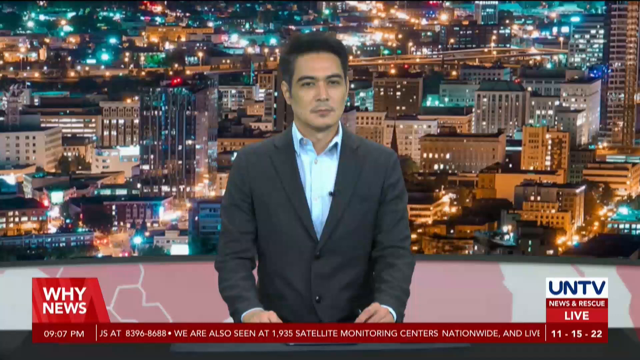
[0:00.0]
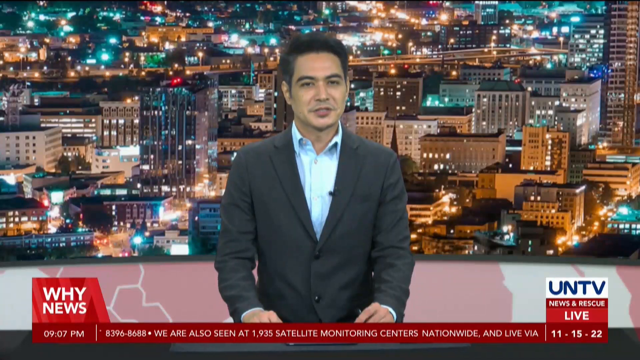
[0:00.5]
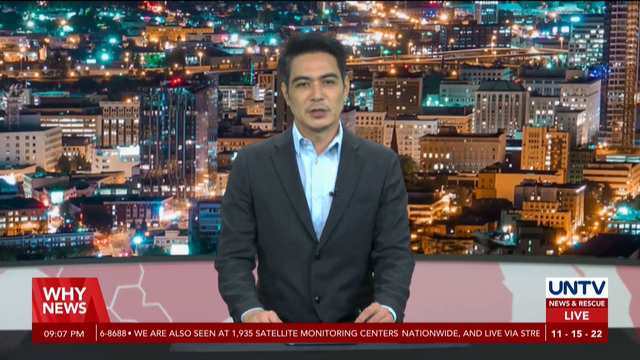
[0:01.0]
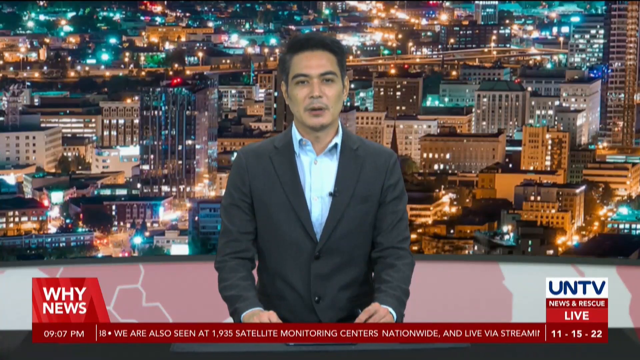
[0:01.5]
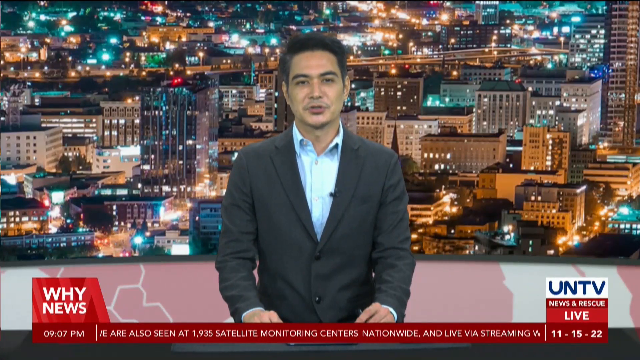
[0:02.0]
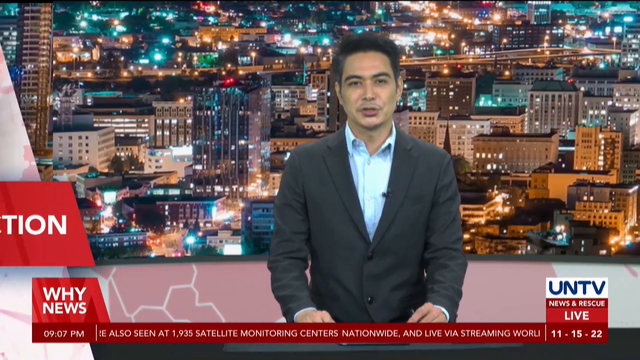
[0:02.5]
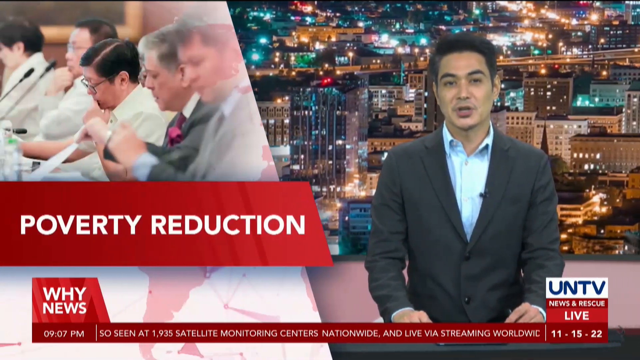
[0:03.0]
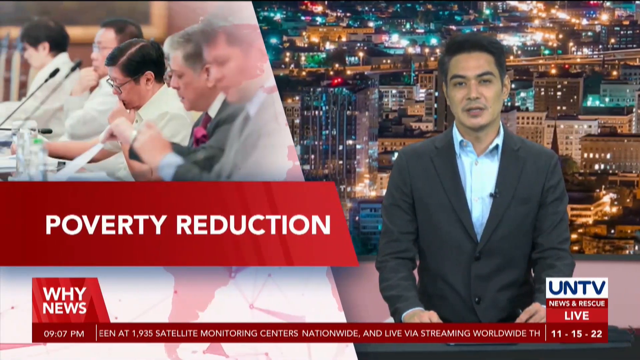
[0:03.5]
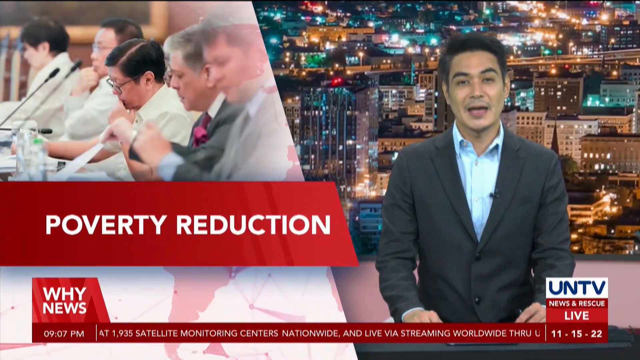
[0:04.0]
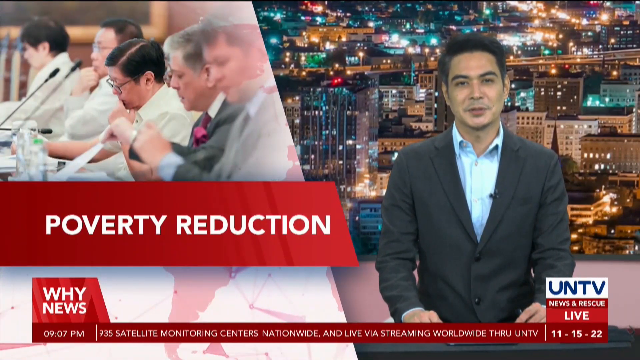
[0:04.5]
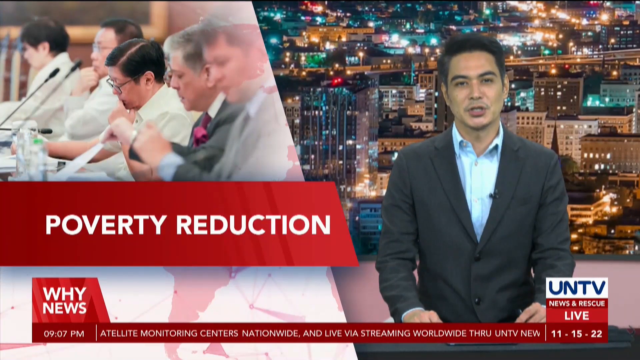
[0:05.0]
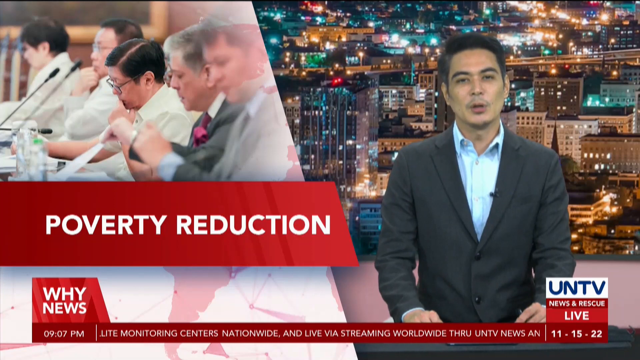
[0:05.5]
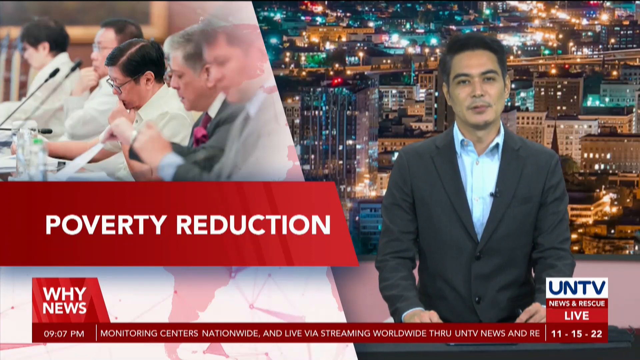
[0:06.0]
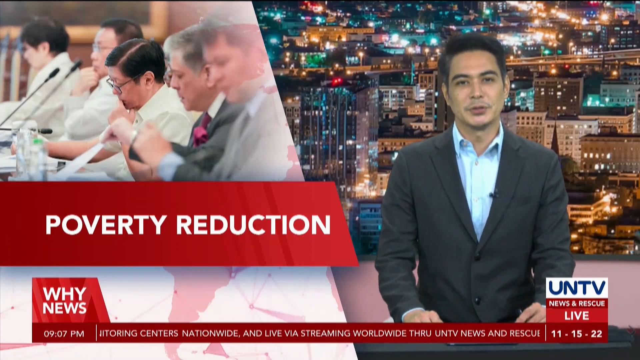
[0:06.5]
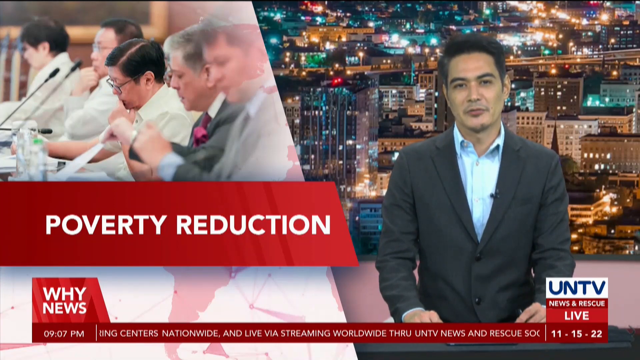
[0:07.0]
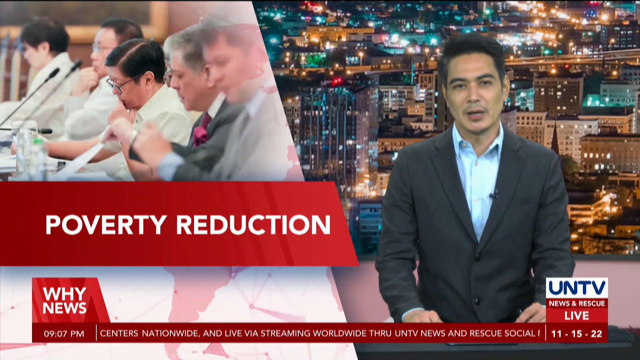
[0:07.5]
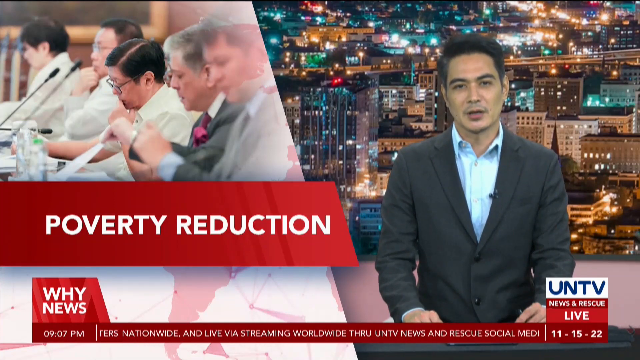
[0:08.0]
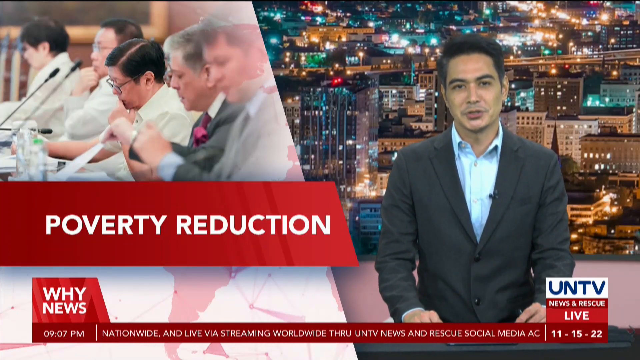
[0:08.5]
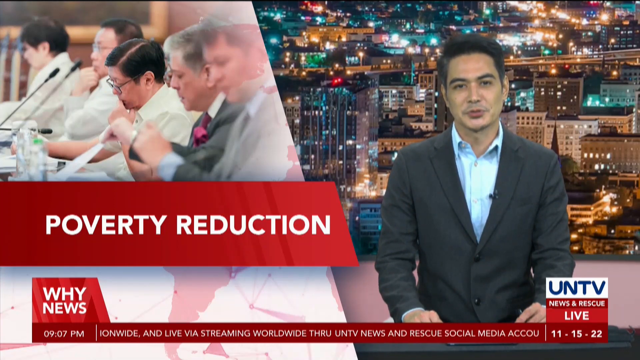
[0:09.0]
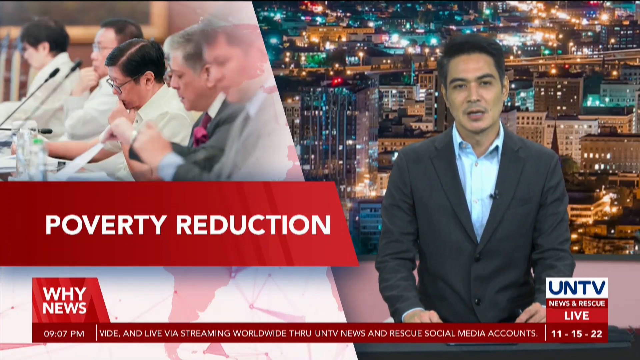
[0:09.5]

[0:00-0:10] The video opens with text including "News and Rescue Life" and "Poverty Reduction." A news presenter is talking; he looks sort of Asian, though this is uncertain. He wears corporate attire: a black jacket with a blue shirt underneath, and he has quite dark hair. On the screen behind him is a picture of a city with many city lights. The subject of his presentation appears to be poverty reduction. He is in a news studio.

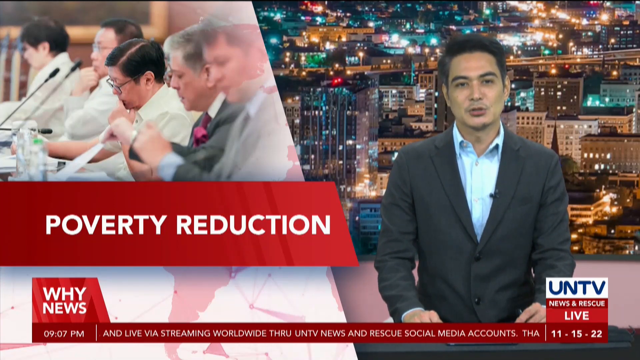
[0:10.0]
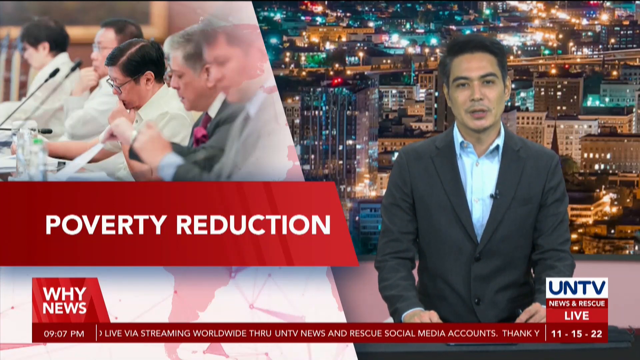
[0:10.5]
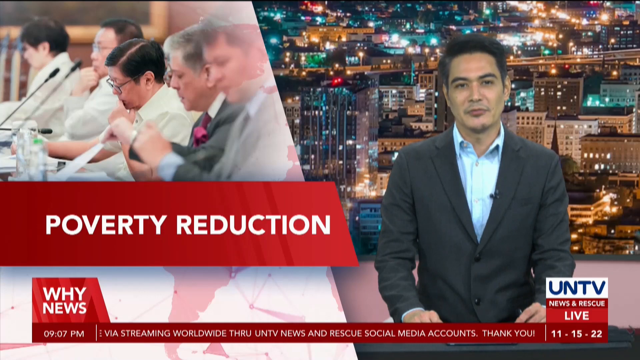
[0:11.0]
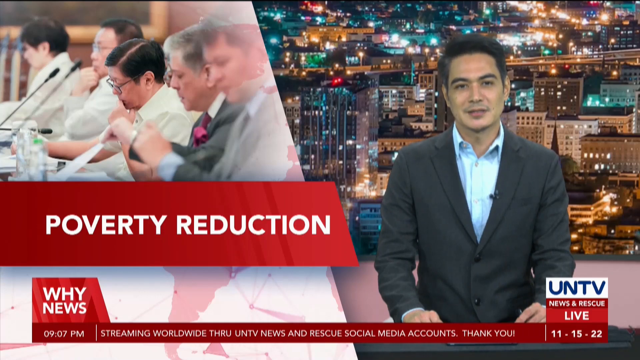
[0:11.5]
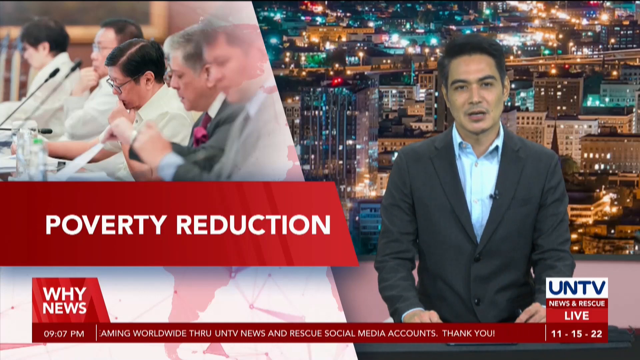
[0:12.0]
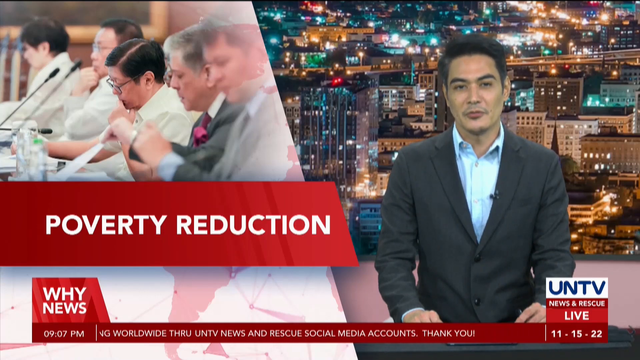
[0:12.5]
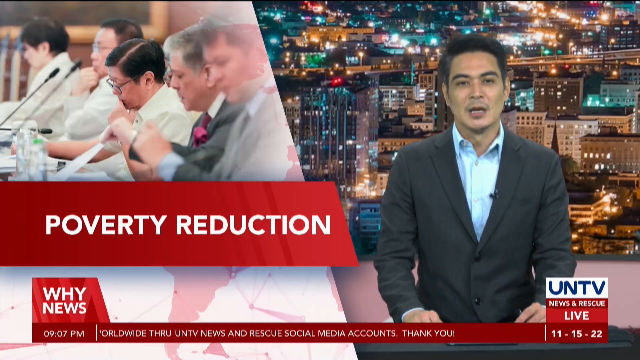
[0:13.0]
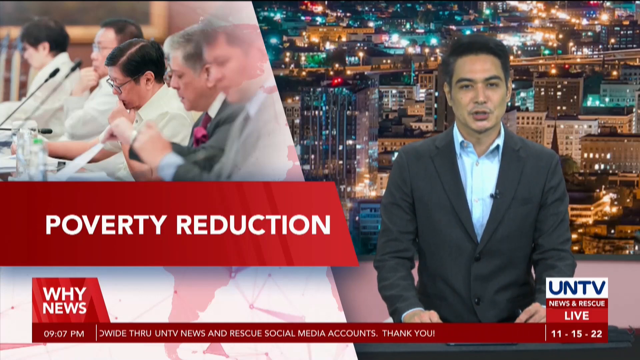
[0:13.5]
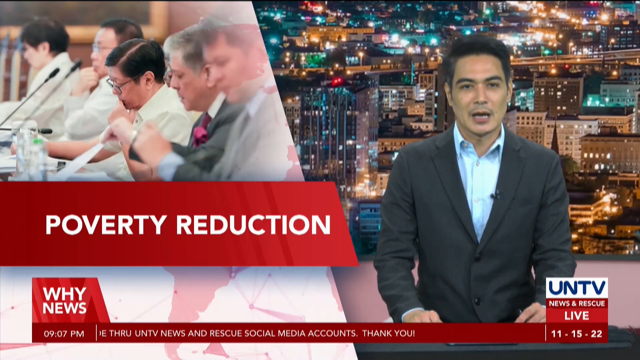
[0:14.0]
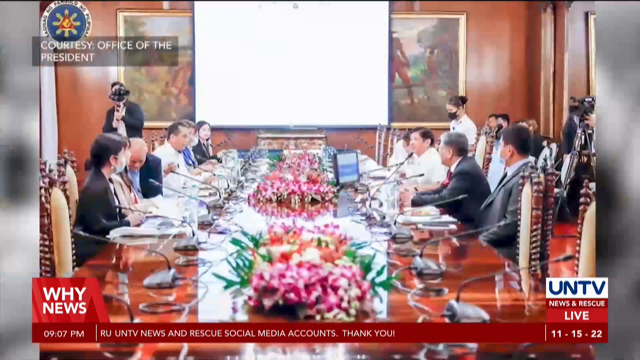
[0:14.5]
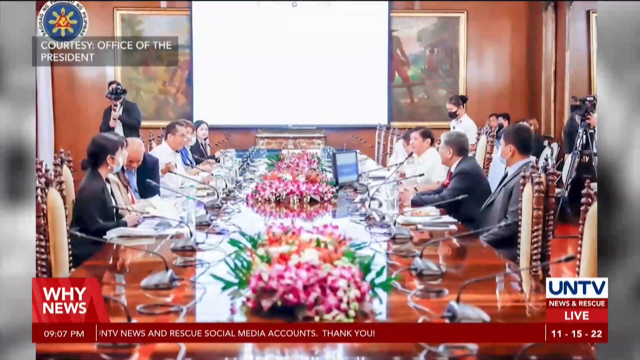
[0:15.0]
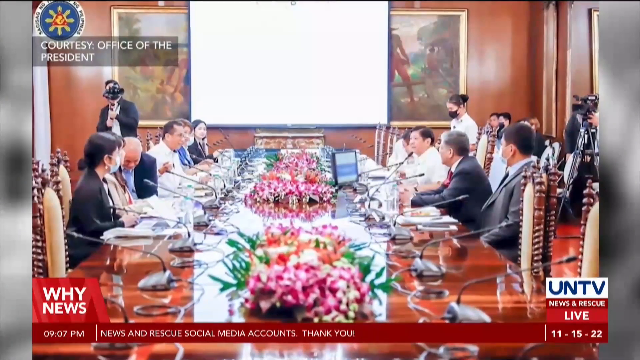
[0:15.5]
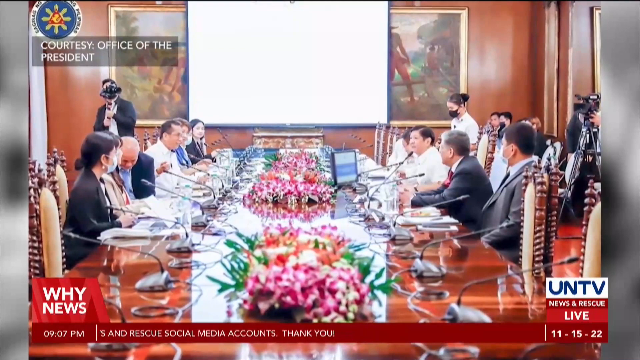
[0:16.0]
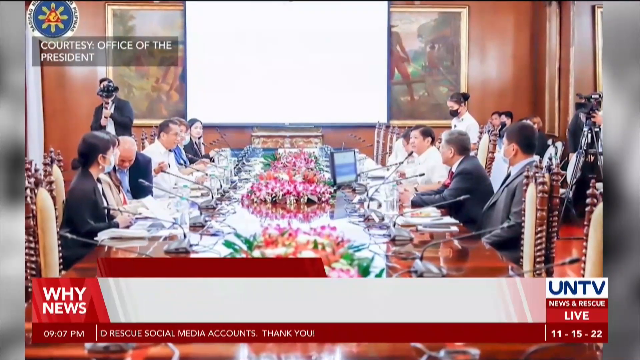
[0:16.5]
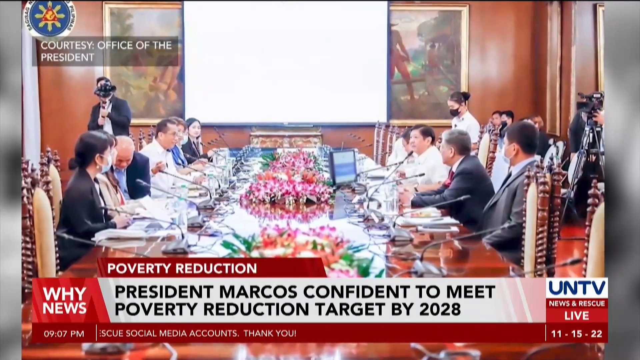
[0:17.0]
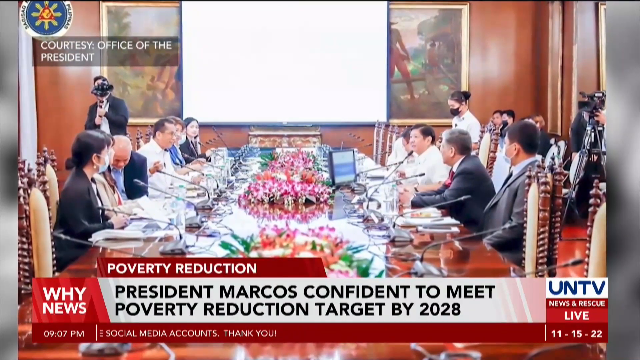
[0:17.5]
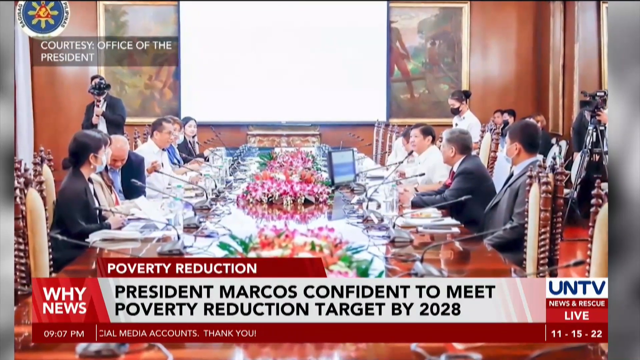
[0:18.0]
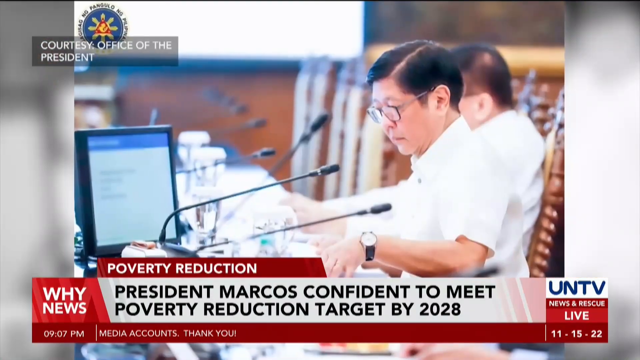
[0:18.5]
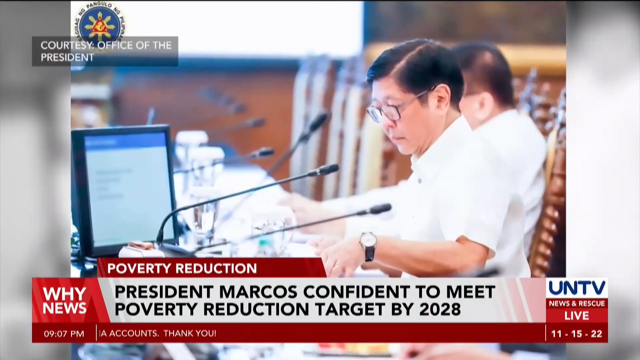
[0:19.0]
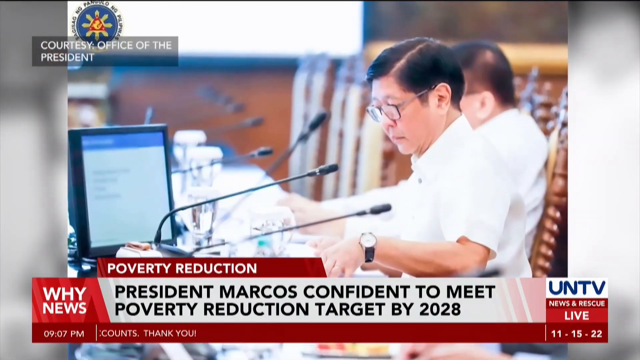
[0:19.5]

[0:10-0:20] Next to the presenter the screen still shows "Poverty Reduction," and half of the screen shows what looks like a place where a conference is going on. The video then moves to footage of a group of people, possibly leaders, having a meeting in a conference room, apparently at the Office of the President in what seems to be an Asian country, possibly the Philippines. Many people sit at a table facing each other, both women and men, all dressed very comfortably, each with a microphone in front of them. Text on the footer of the screen reads "Poverty Reduction, President Marcos Confident, submits poverty reduction targets by 2028."